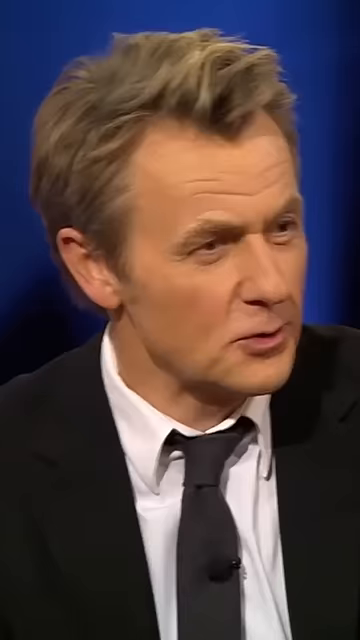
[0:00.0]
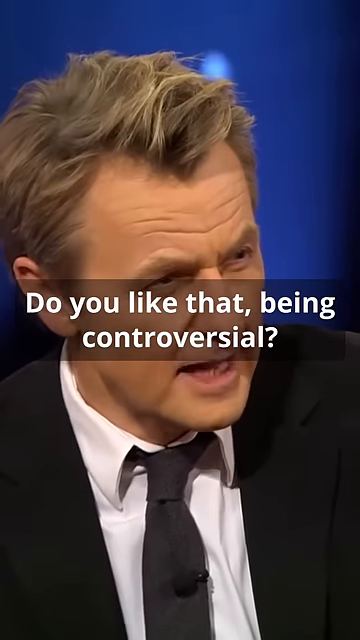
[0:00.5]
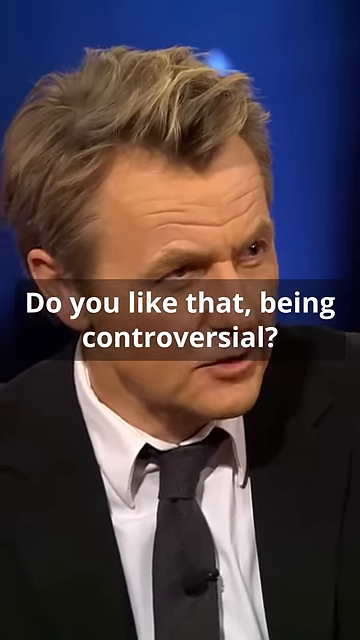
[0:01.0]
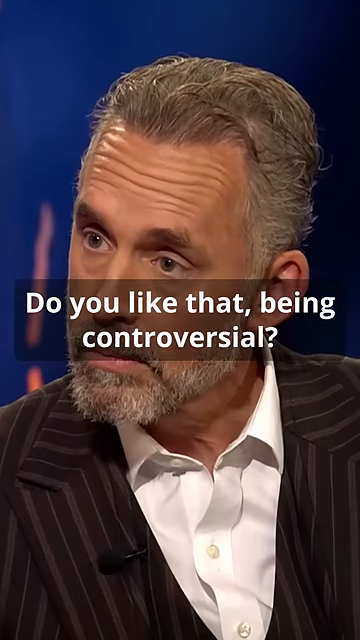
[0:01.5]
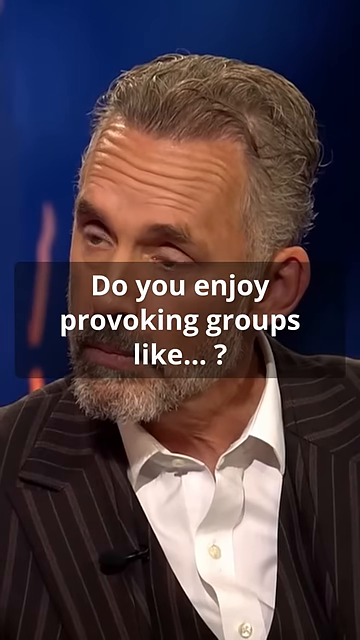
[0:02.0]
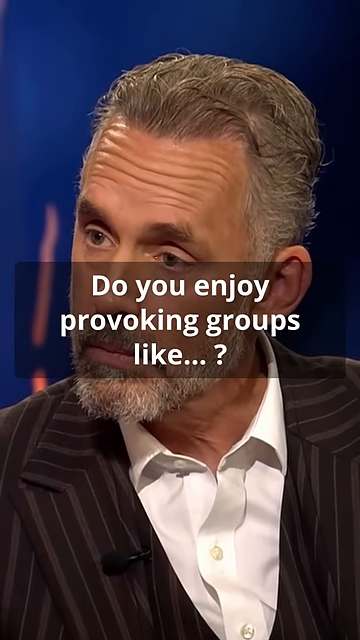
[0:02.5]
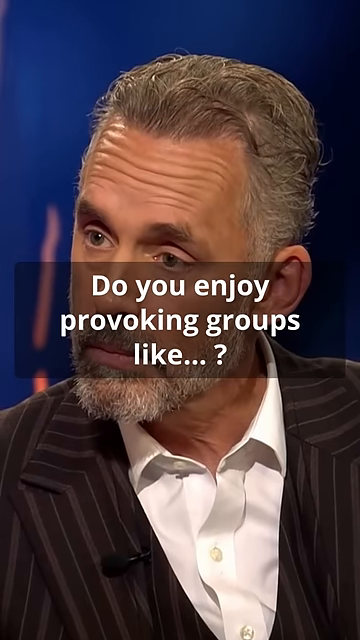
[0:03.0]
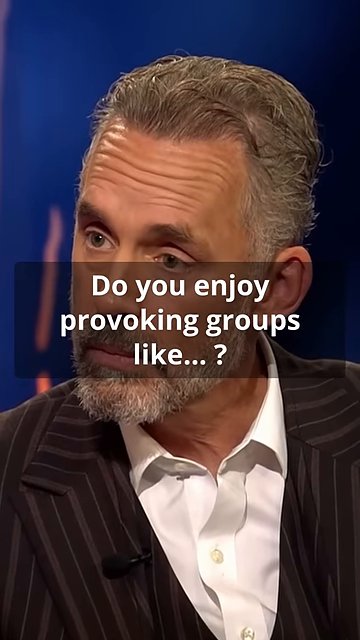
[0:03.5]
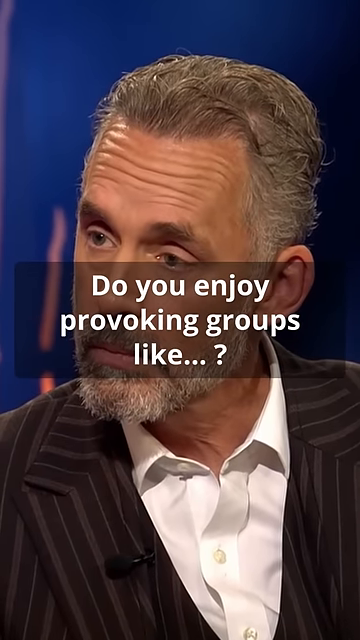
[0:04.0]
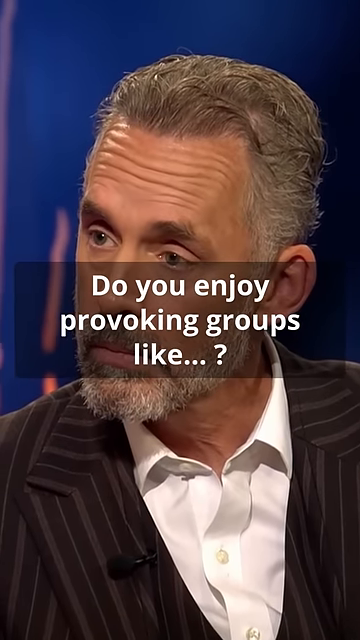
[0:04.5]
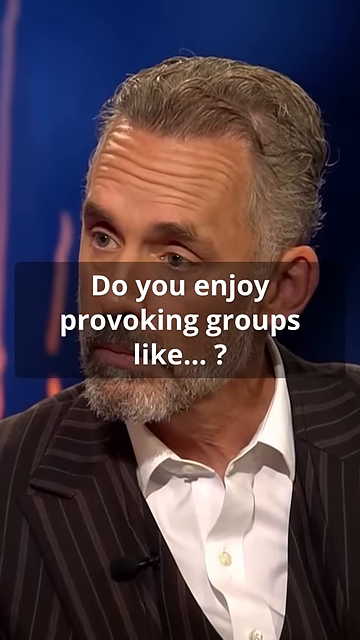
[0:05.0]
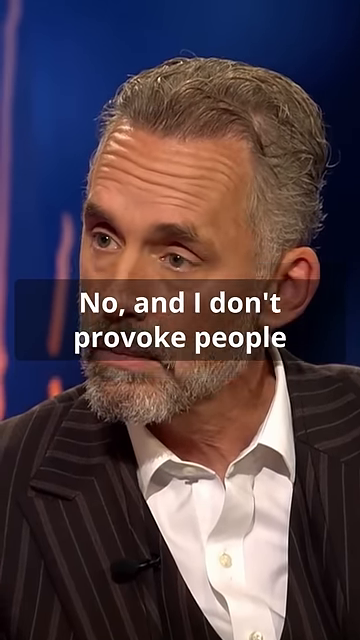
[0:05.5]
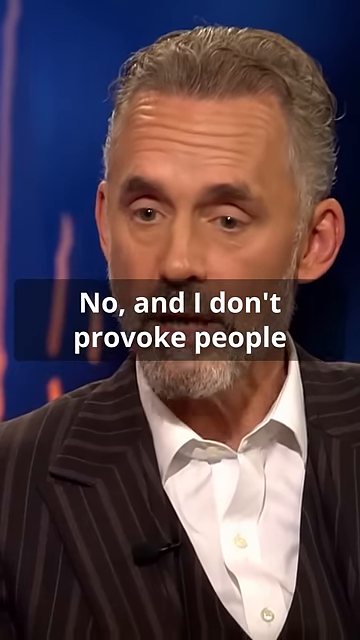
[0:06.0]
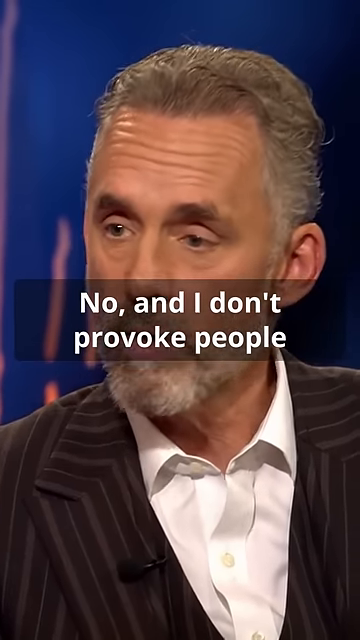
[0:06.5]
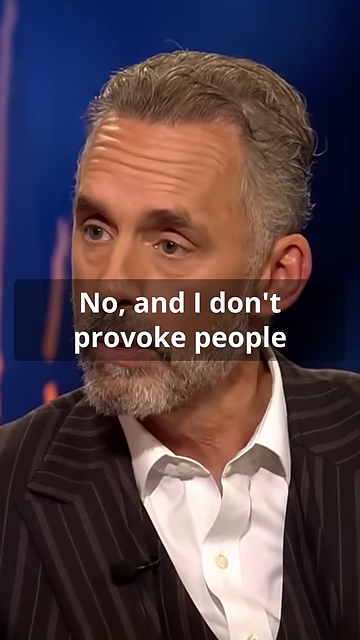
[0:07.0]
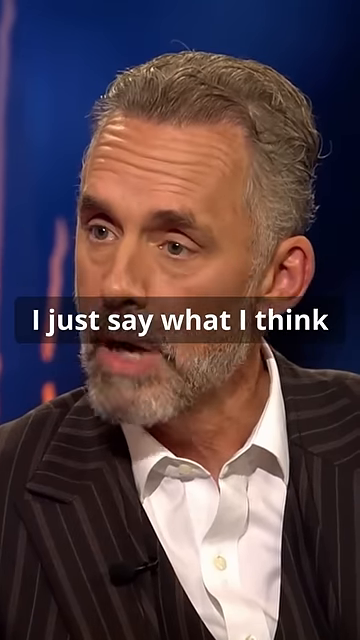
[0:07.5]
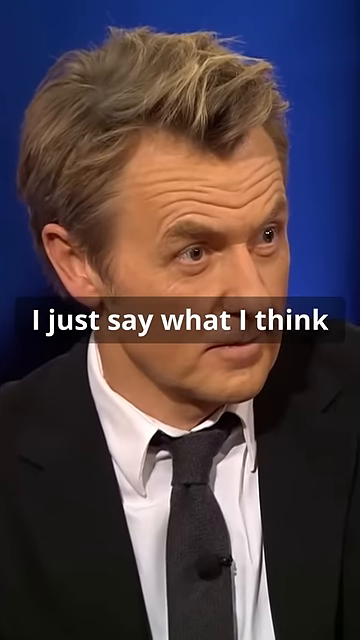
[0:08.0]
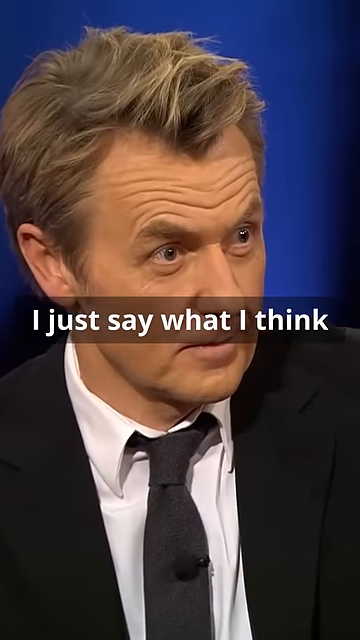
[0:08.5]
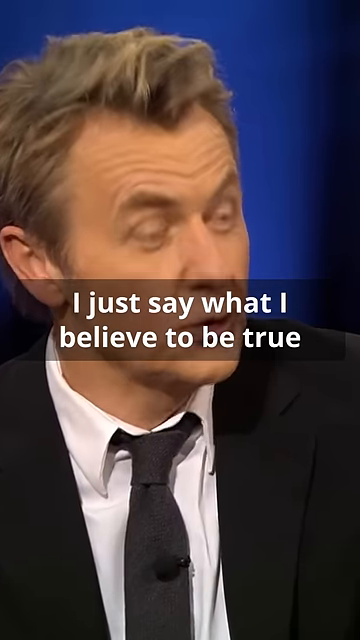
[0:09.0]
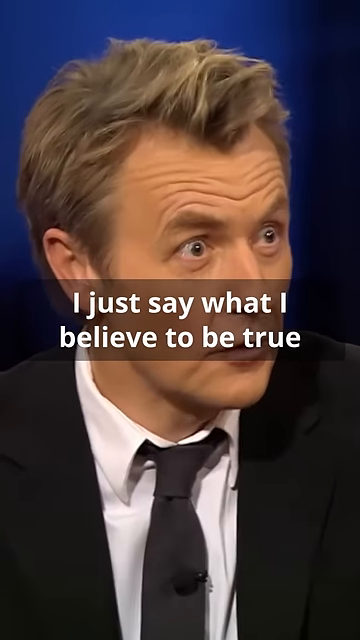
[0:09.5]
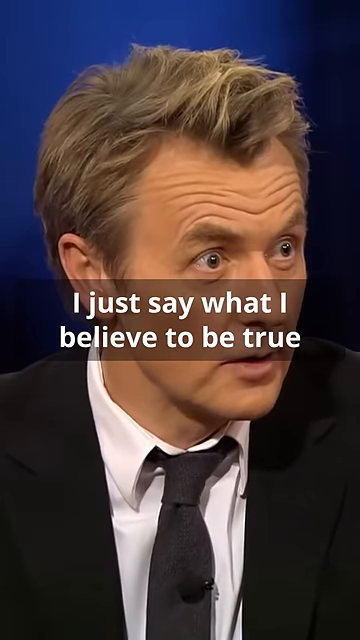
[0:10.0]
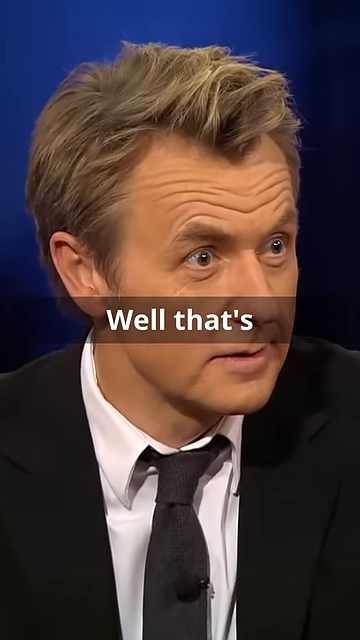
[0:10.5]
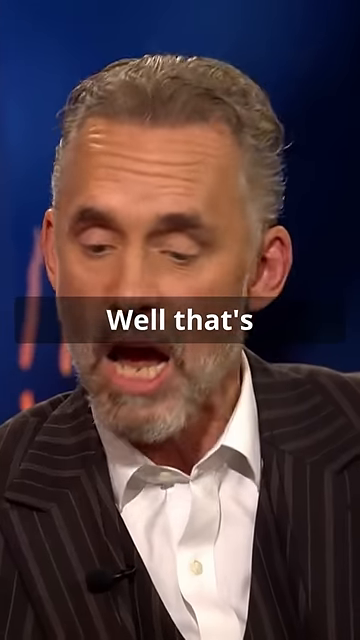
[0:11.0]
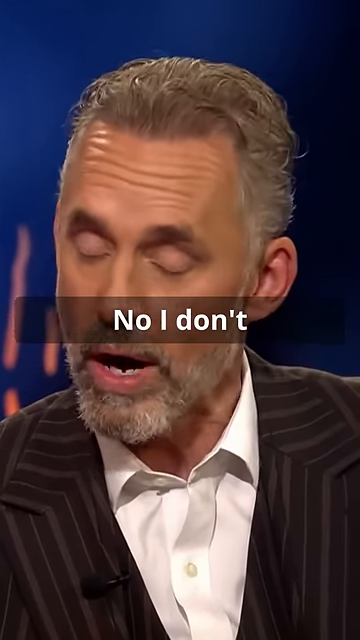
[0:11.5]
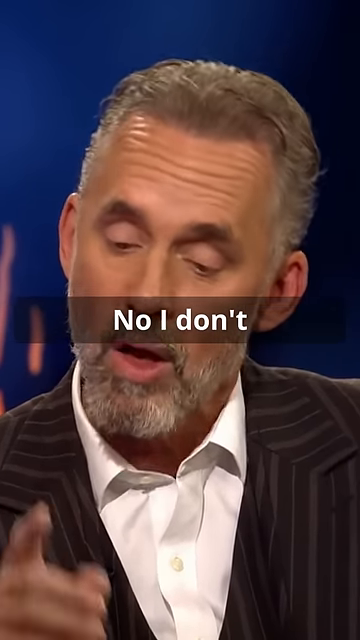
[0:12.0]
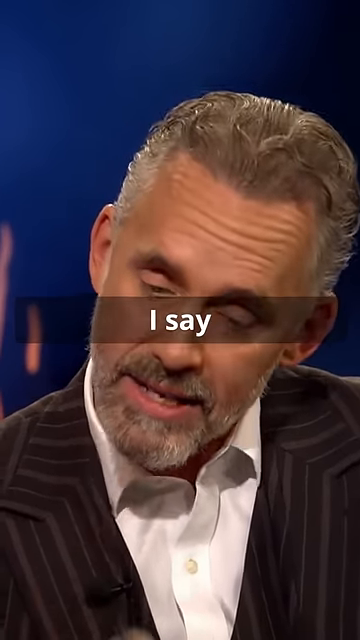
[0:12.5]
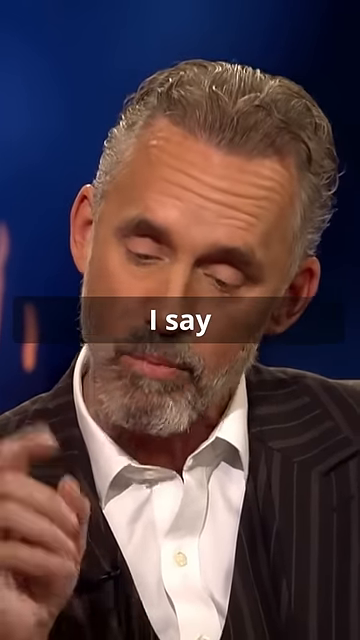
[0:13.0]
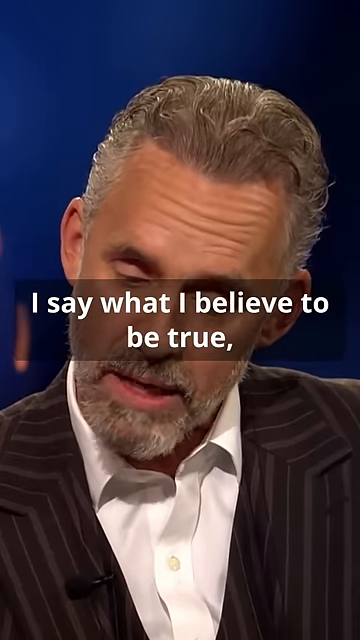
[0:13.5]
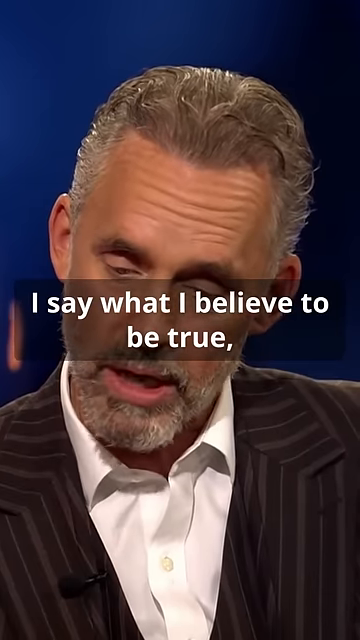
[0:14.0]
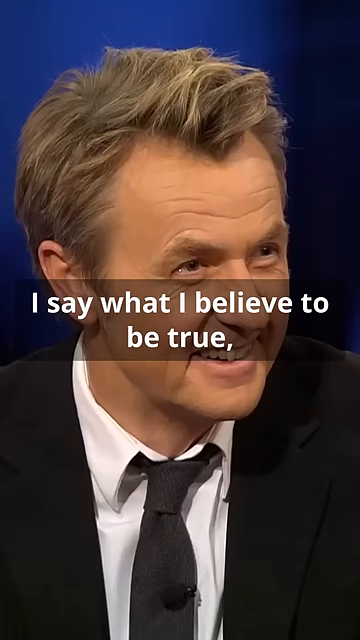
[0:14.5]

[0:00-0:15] The video opens on a man who looks to be in his 60s, wearing a black suit, a black tie and a white shirt underneath, with short blonde hair. Text captions pop up in front of the speakers' faces. The first man's caption reads "do you like that being controversial". The video then shows Jordan Peterson talking with this man. Peterson wears a pinstripe black suit with a white shirt underneath and no tie, and has a gray beard and short gray hair. He looks intently at the man interviewing him as the captions read "no and I don't provoke people" and "I just say what I think". The camera cuts back to the man, with the text "I just say what I believe to be true", then switches back to Peterson, who says, "well that's no I don't I say what I believe to be true." The camera keeps switching back and forth between the two men.